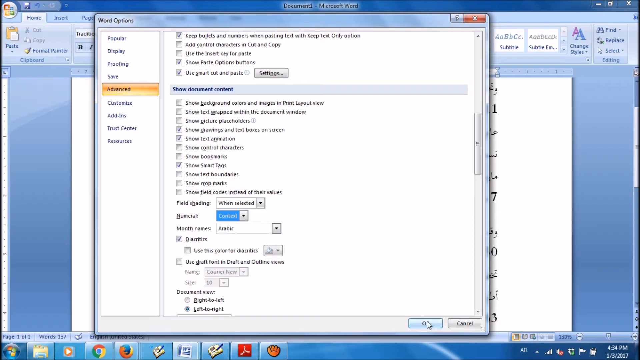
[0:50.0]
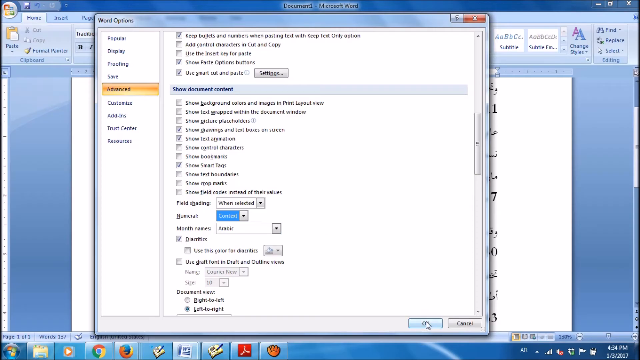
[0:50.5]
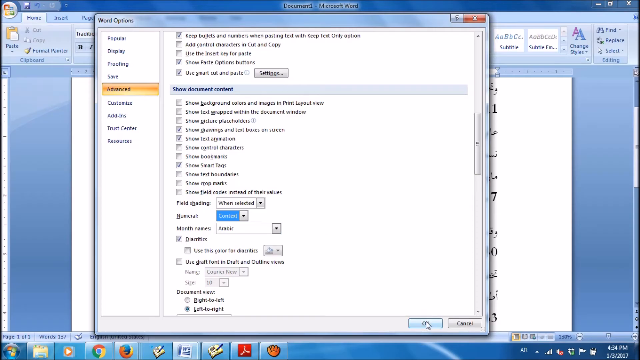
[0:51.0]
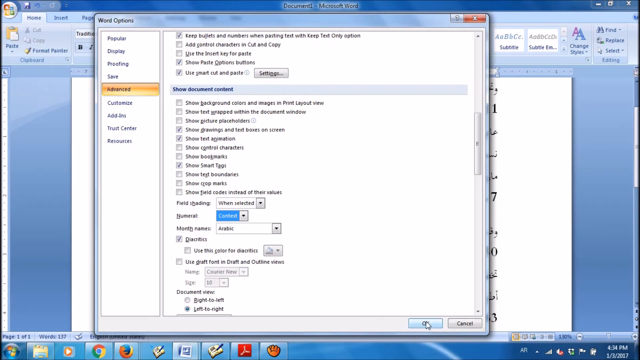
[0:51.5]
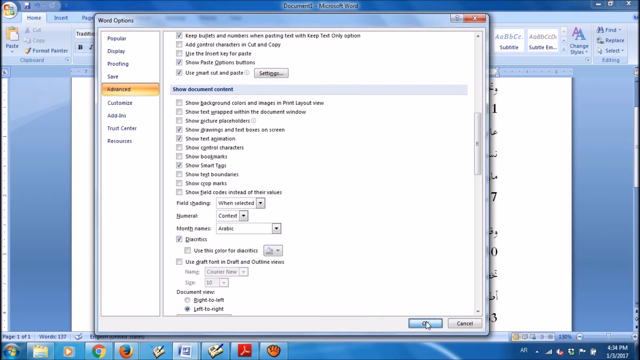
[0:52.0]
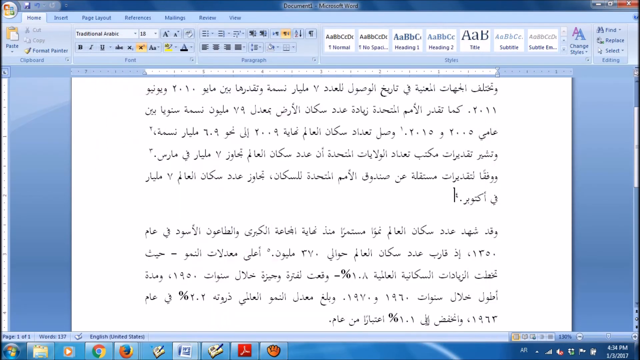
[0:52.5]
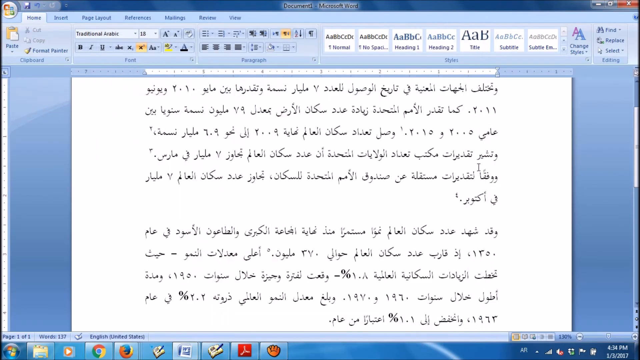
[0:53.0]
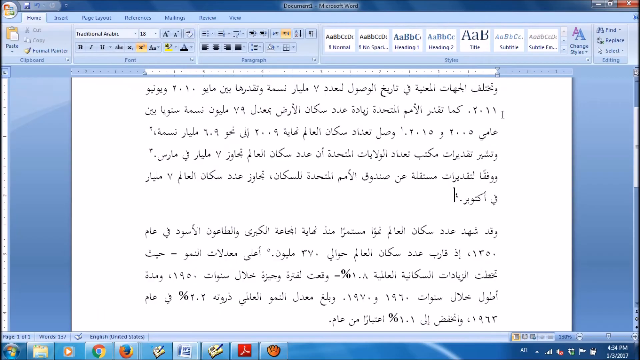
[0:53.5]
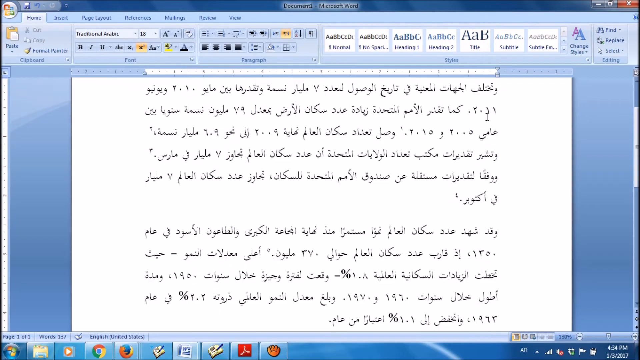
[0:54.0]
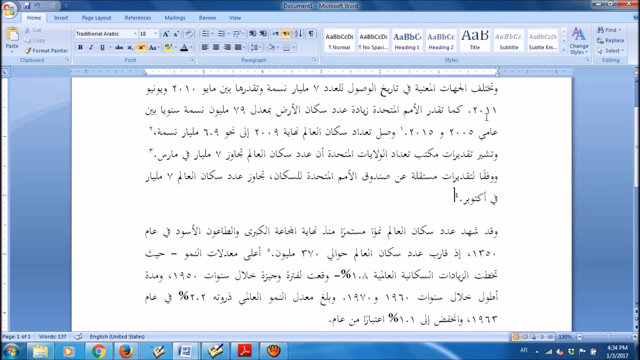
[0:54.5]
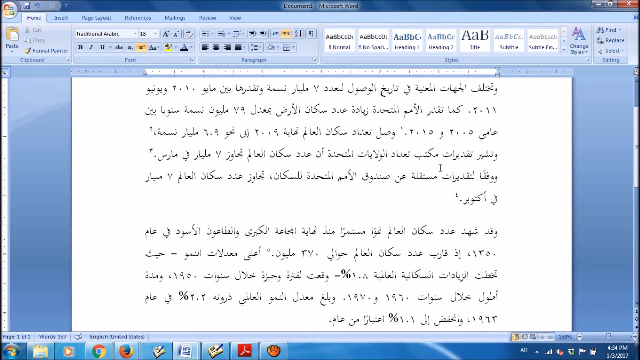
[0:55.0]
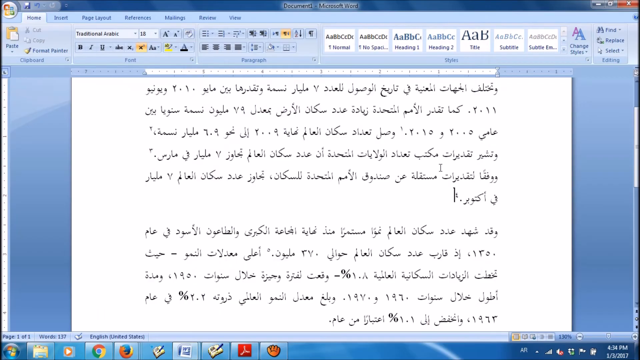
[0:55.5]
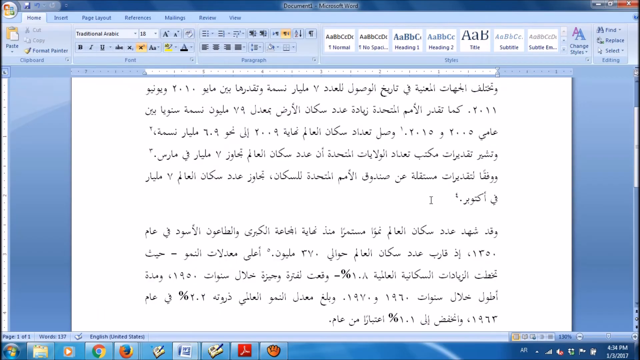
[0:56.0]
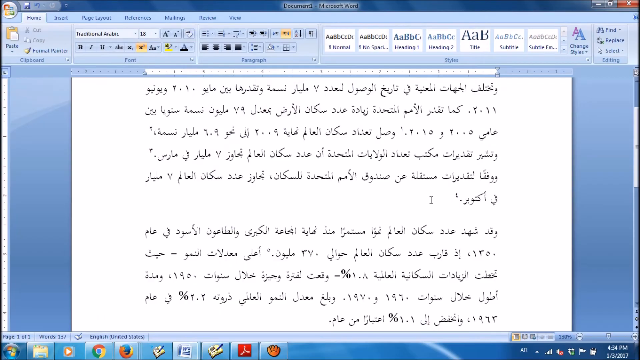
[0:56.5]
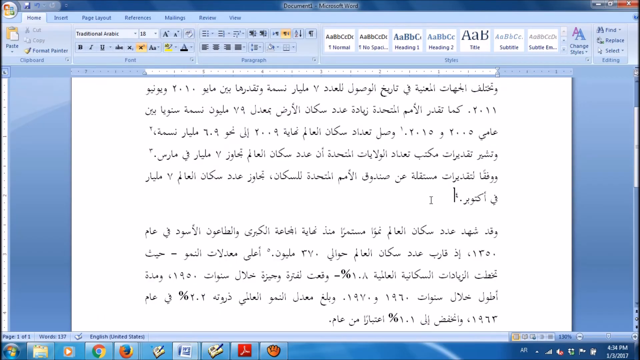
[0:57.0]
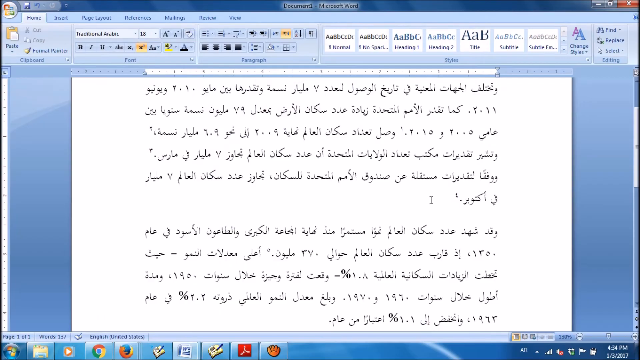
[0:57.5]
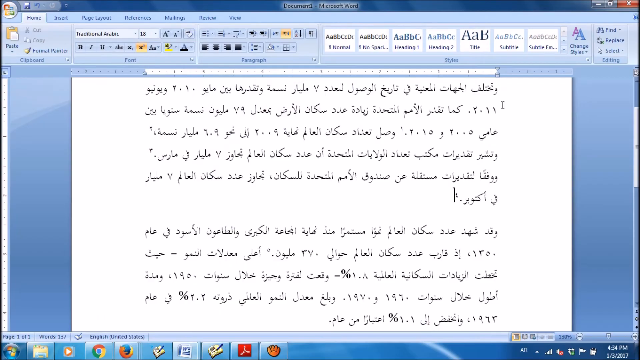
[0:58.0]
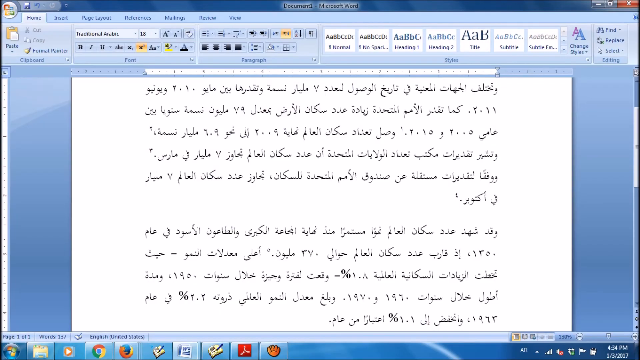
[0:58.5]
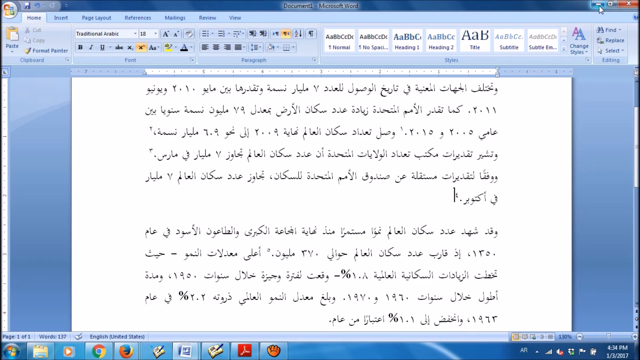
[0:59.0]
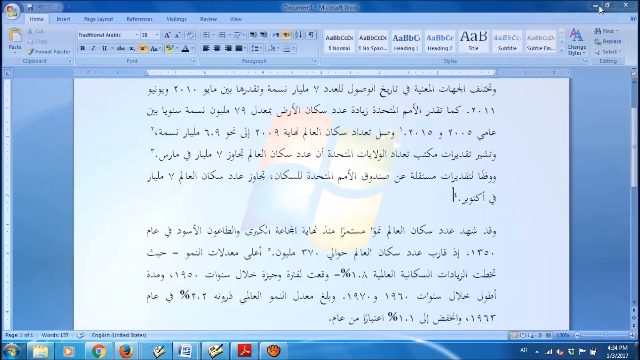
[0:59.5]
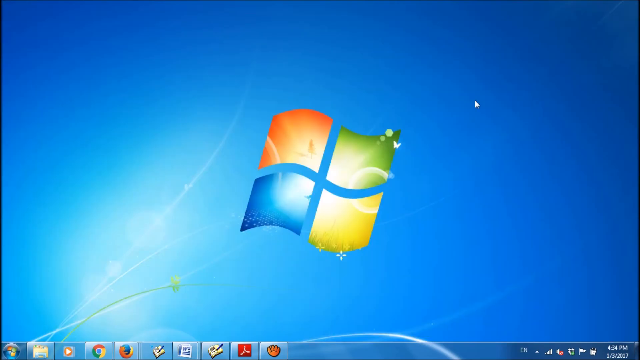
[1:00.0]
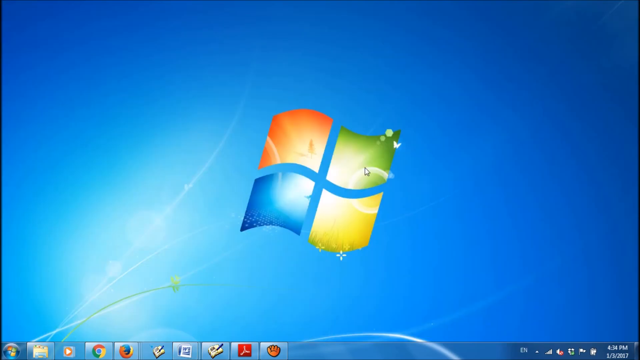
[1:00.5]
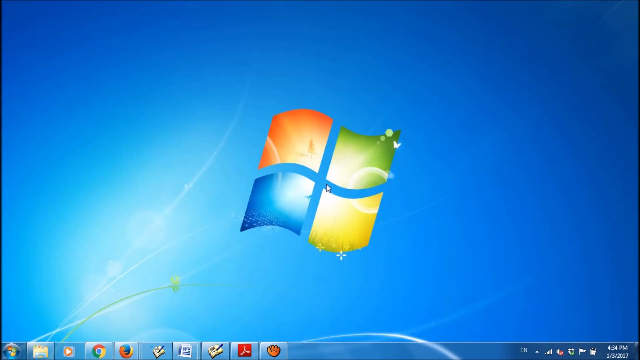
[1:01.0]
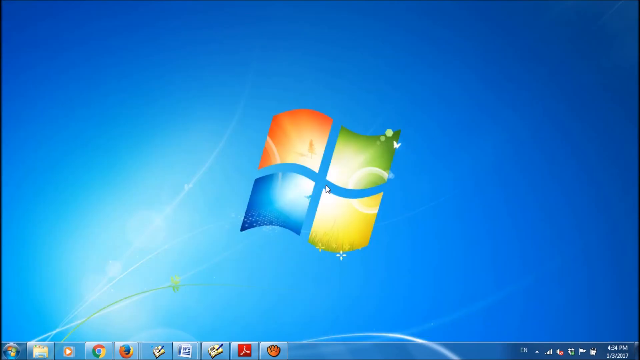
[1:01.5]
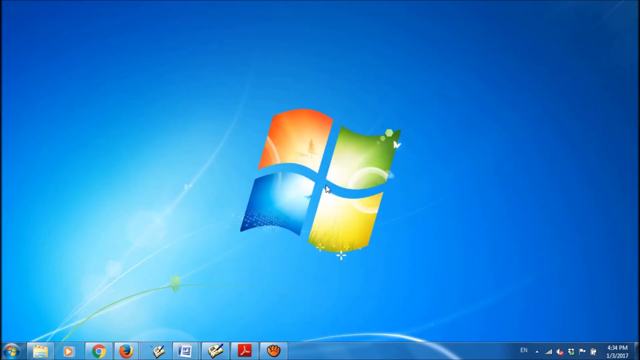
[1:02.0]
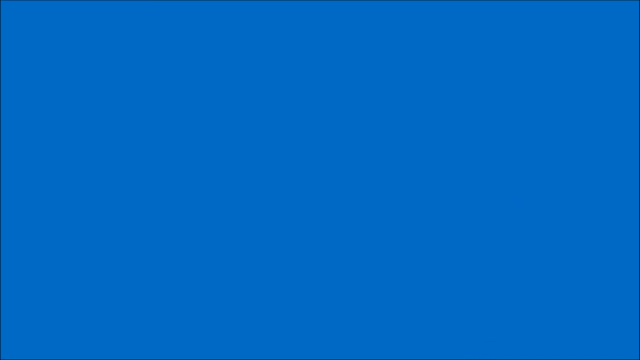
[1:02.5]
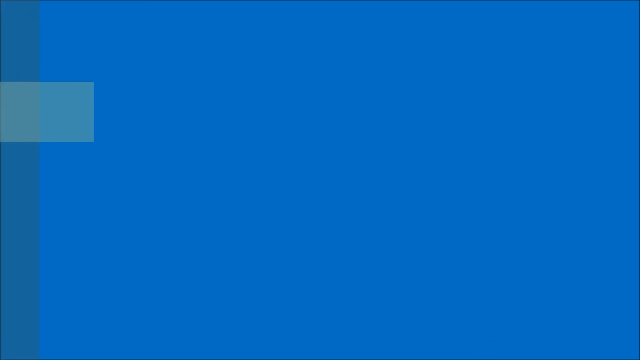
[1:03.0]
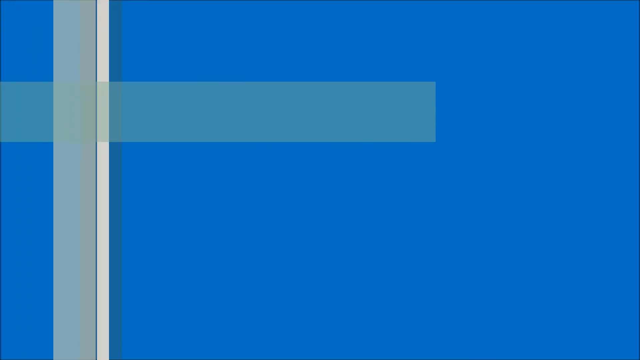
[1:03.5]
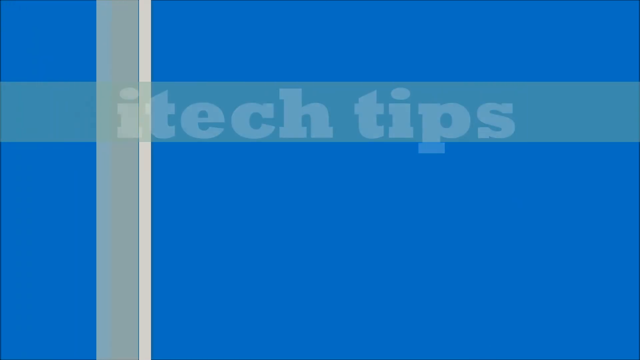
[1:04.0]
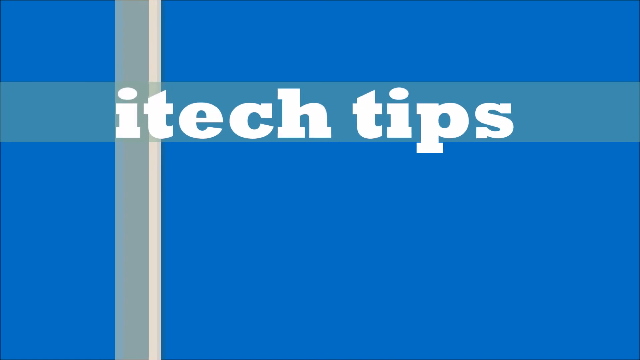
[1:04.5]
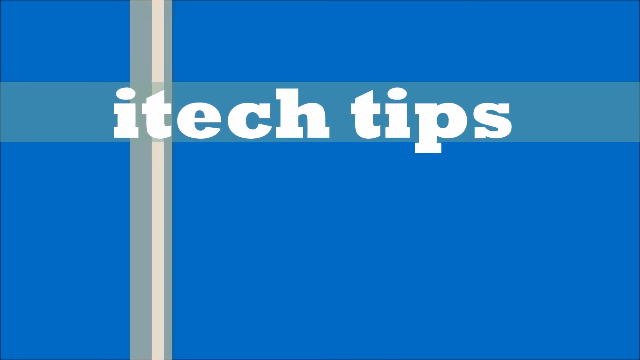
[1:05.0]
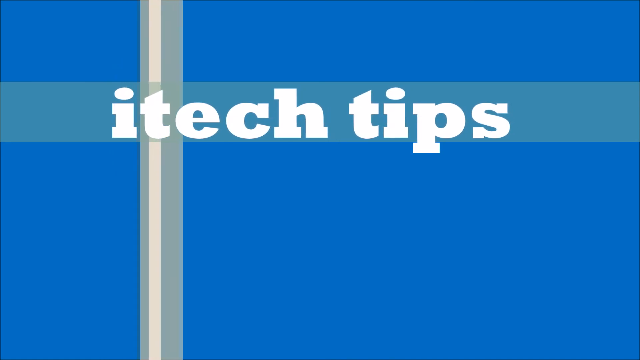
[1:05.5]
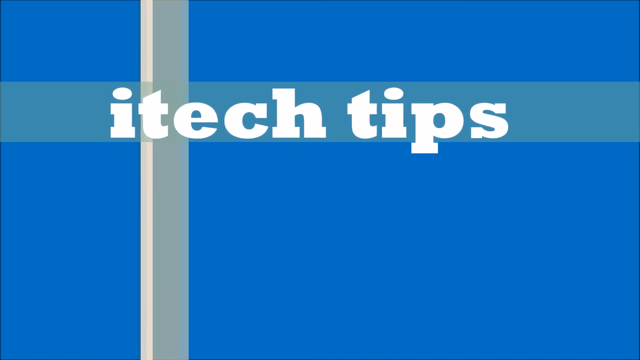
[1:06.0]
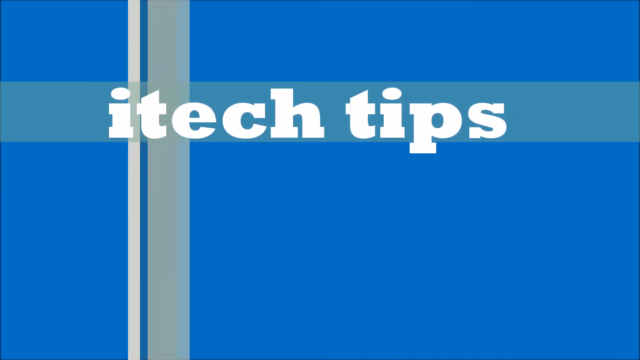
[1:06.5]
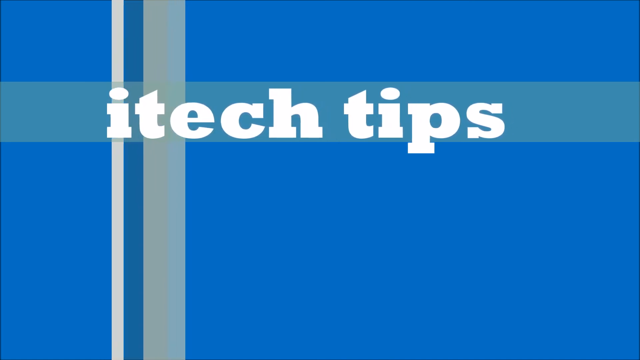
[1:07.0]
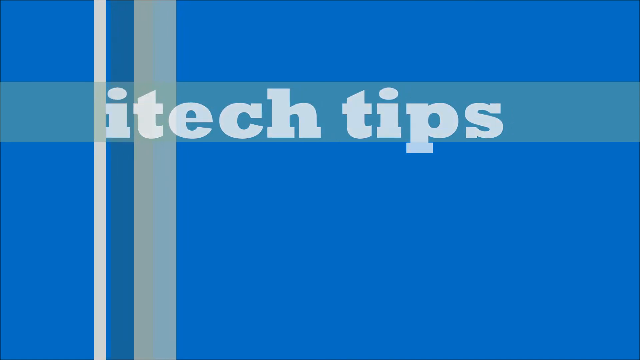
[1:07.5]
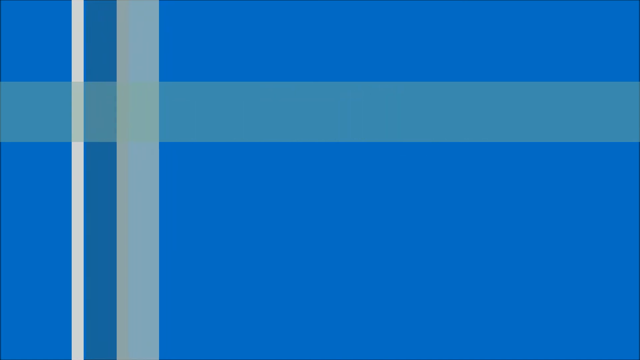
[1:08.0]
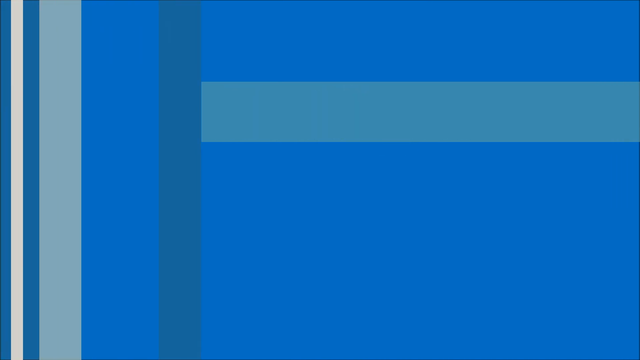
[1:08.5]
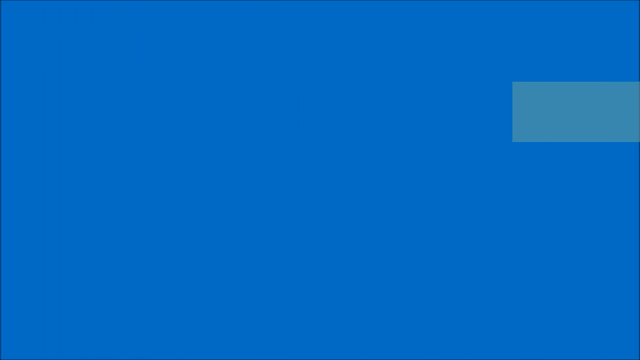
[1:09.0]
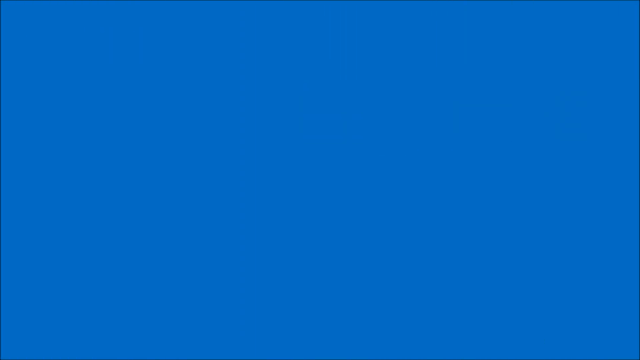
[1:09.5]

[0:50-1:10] Text written in Arabic fills a document page containing information.